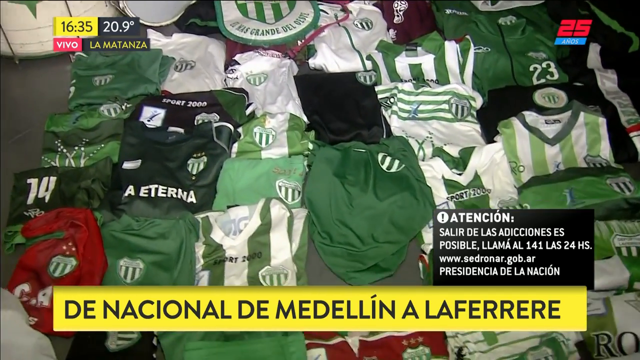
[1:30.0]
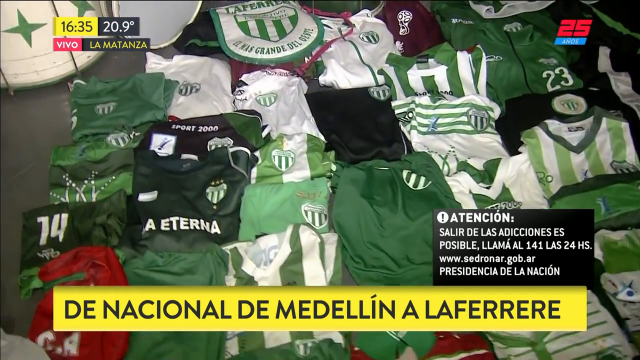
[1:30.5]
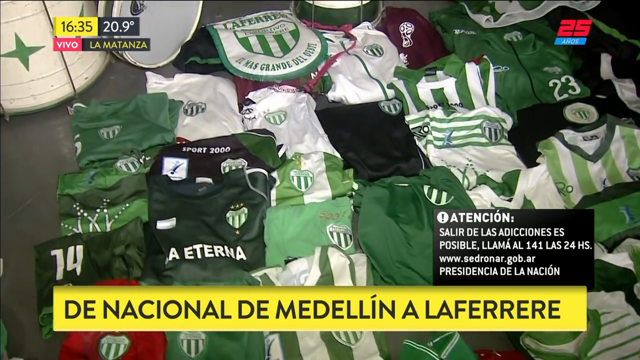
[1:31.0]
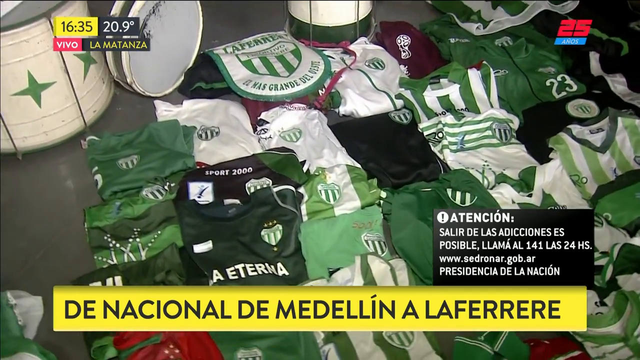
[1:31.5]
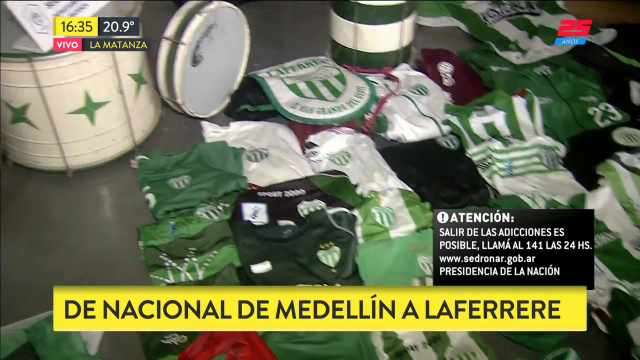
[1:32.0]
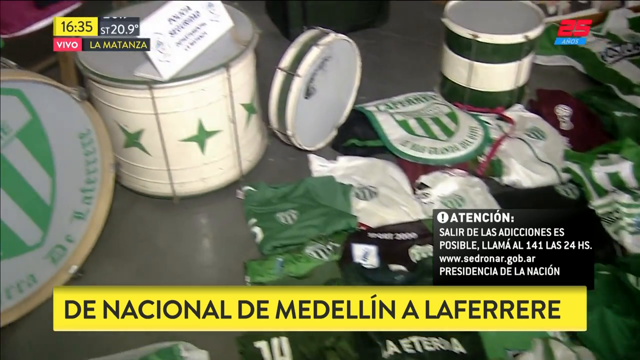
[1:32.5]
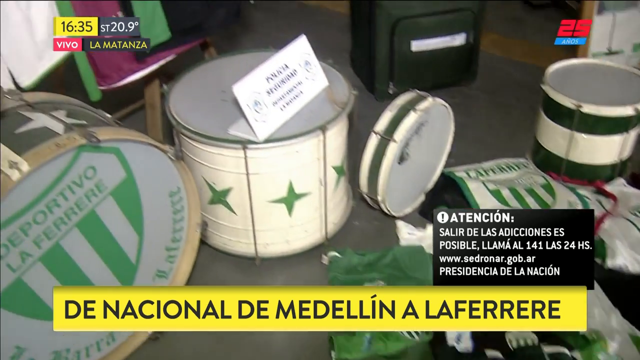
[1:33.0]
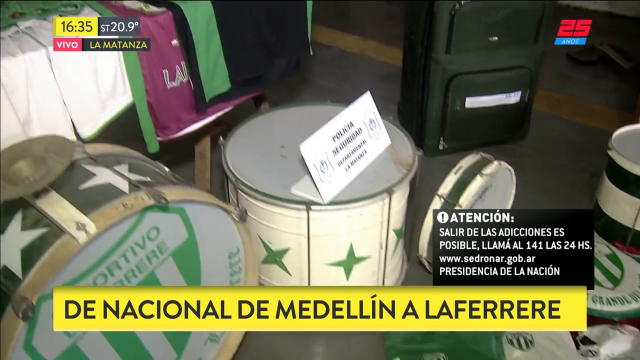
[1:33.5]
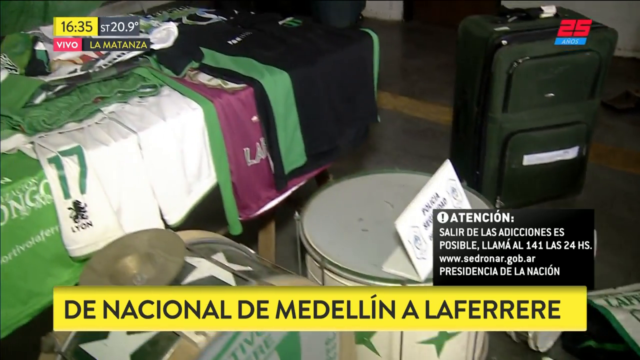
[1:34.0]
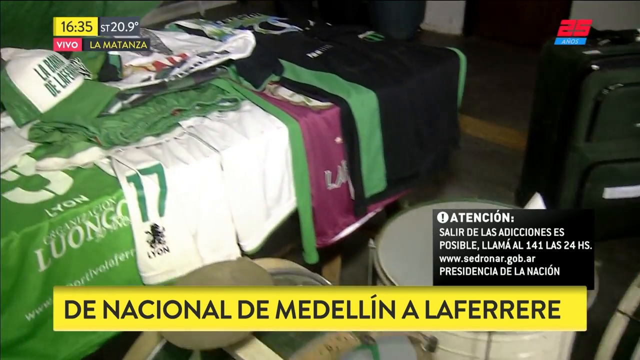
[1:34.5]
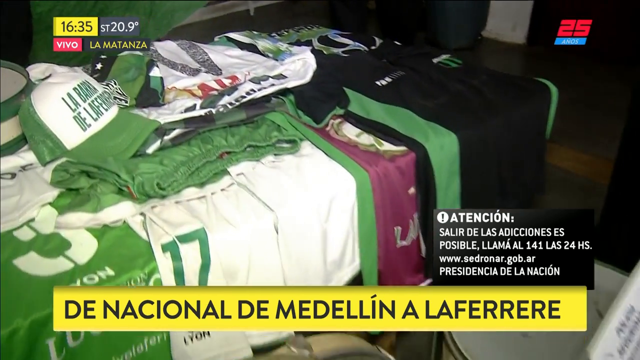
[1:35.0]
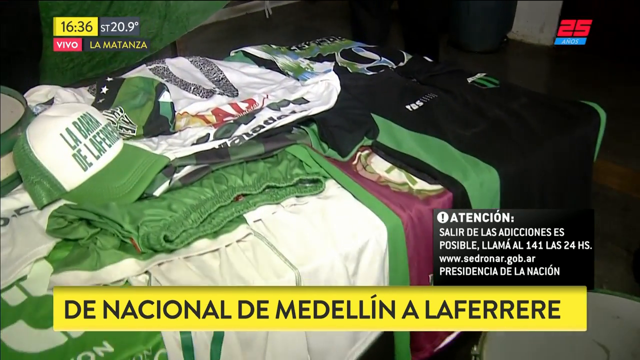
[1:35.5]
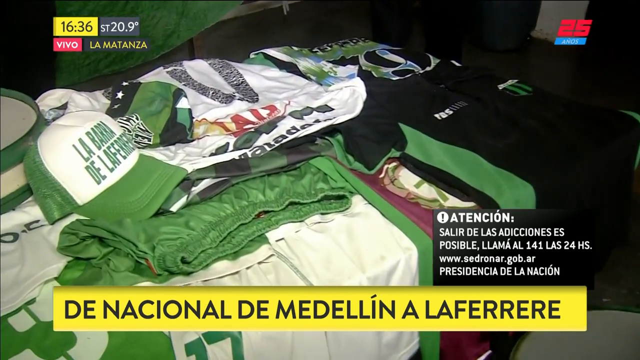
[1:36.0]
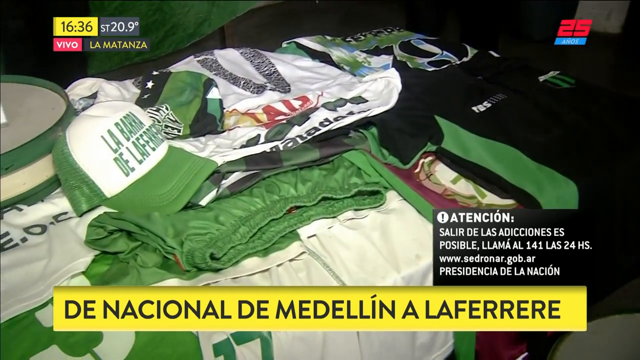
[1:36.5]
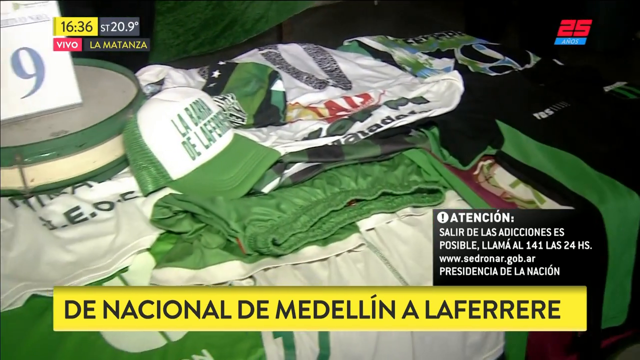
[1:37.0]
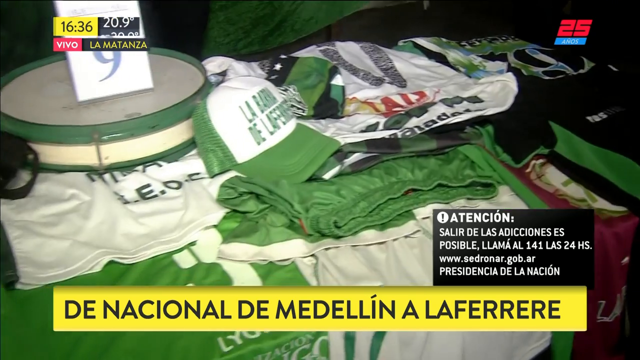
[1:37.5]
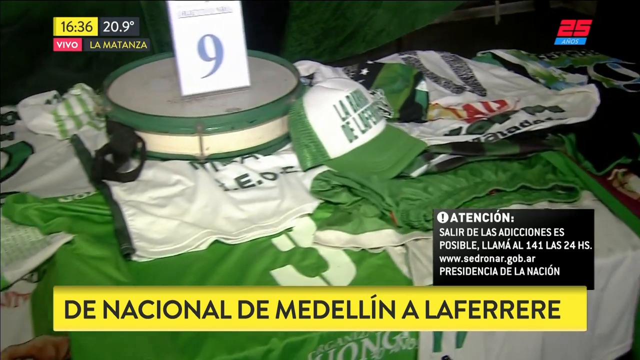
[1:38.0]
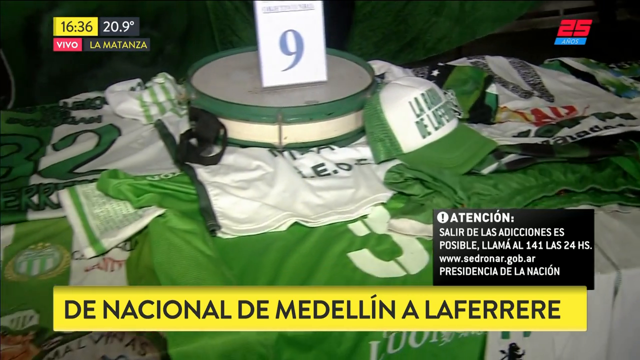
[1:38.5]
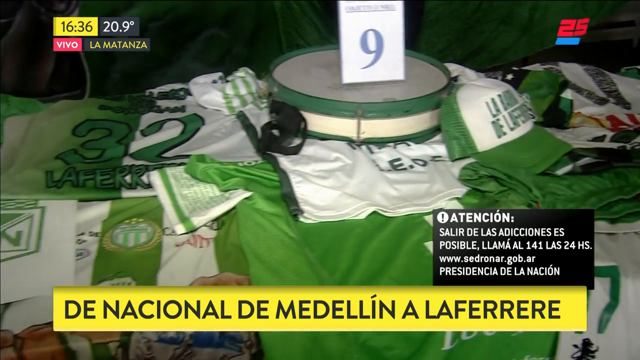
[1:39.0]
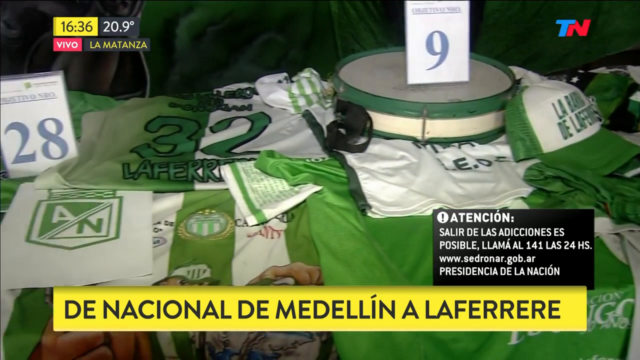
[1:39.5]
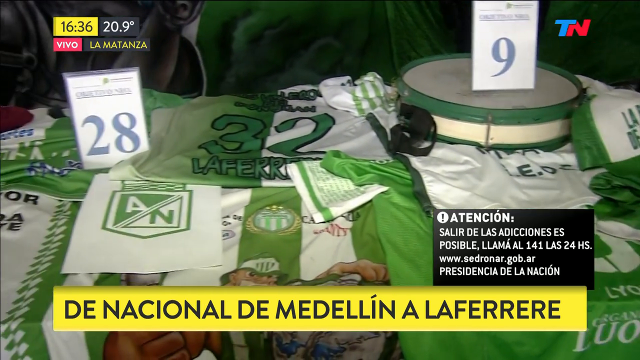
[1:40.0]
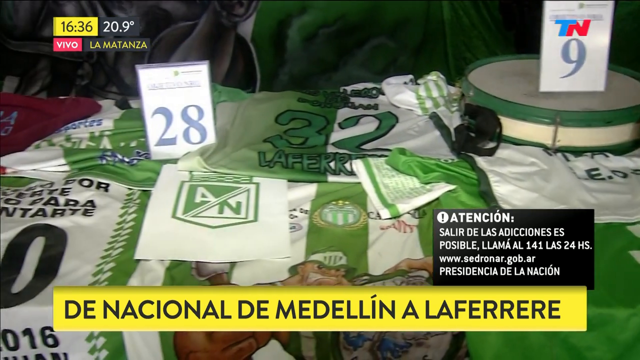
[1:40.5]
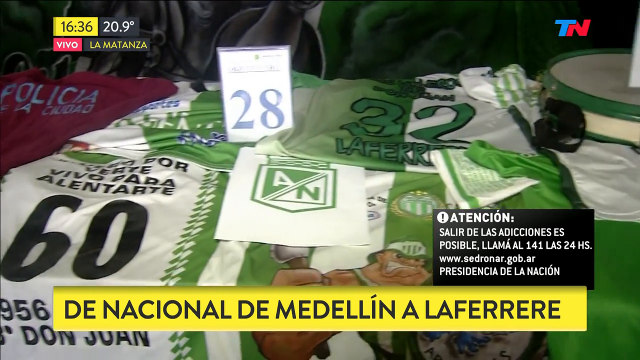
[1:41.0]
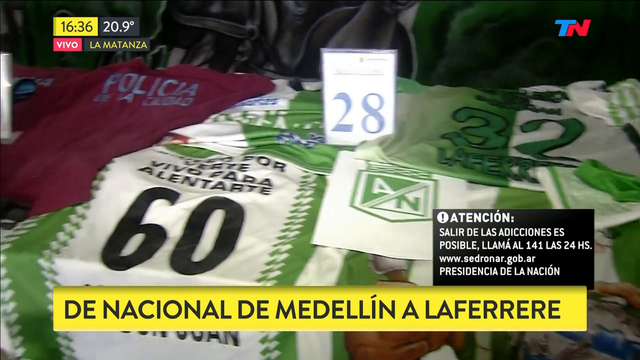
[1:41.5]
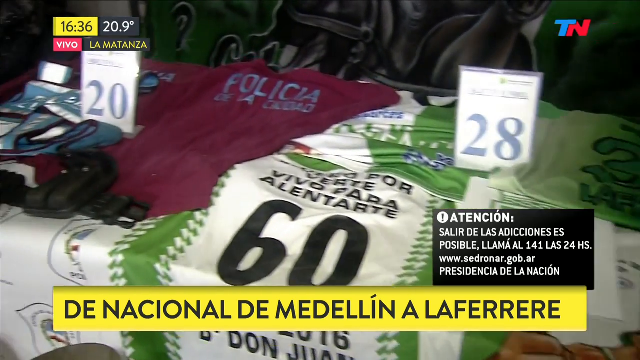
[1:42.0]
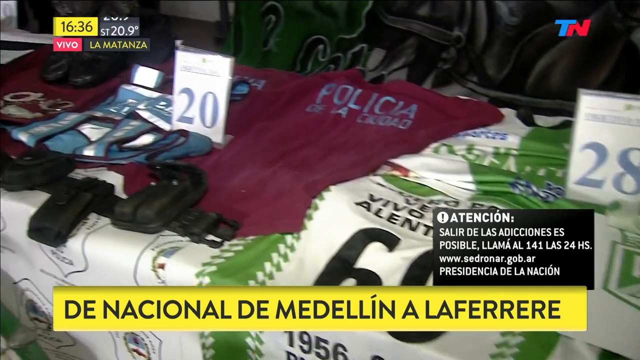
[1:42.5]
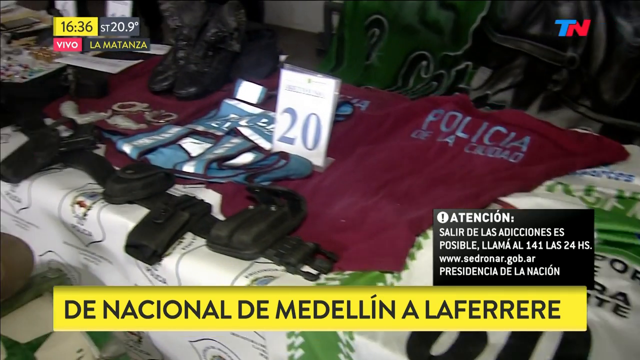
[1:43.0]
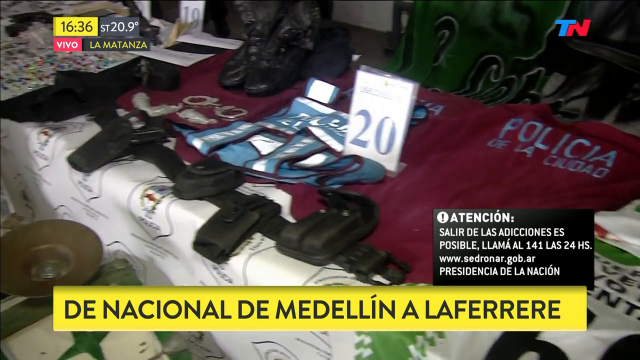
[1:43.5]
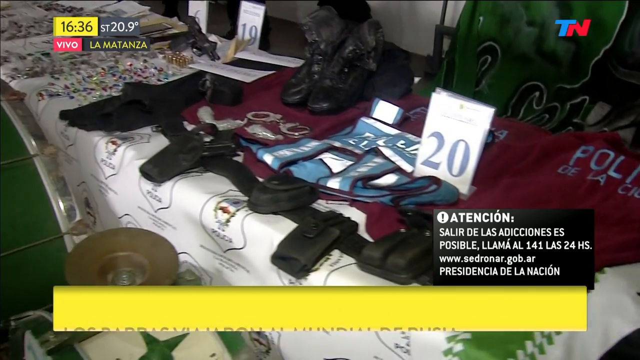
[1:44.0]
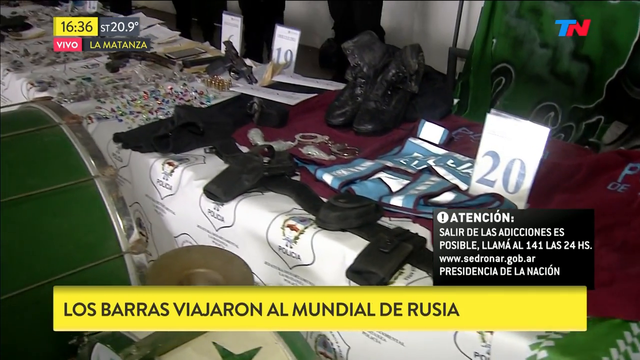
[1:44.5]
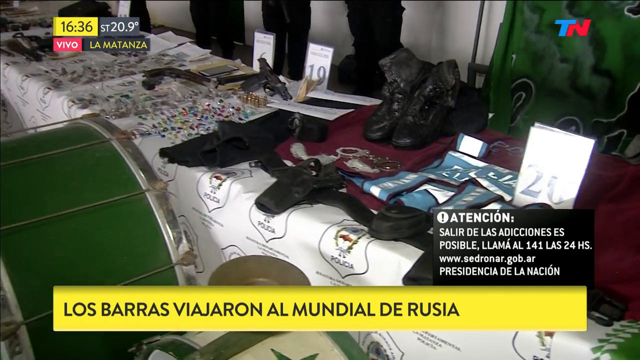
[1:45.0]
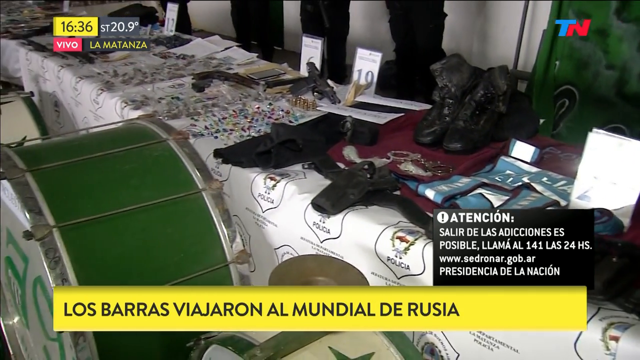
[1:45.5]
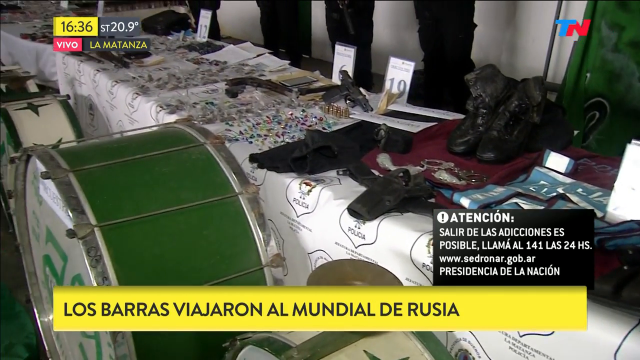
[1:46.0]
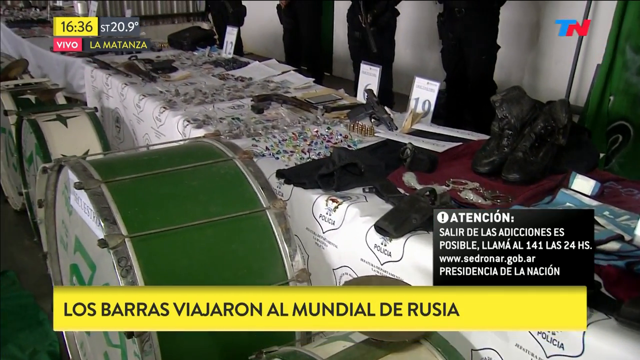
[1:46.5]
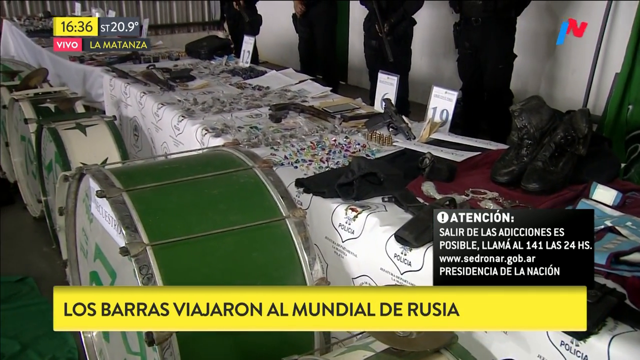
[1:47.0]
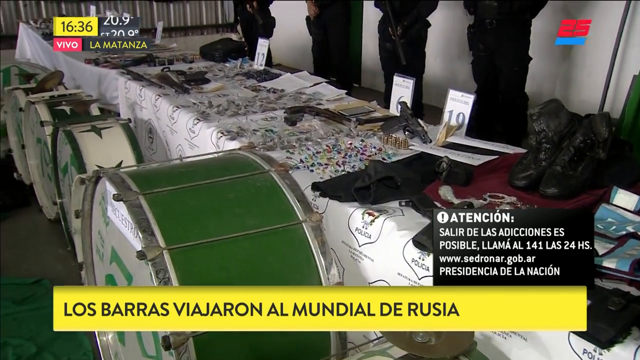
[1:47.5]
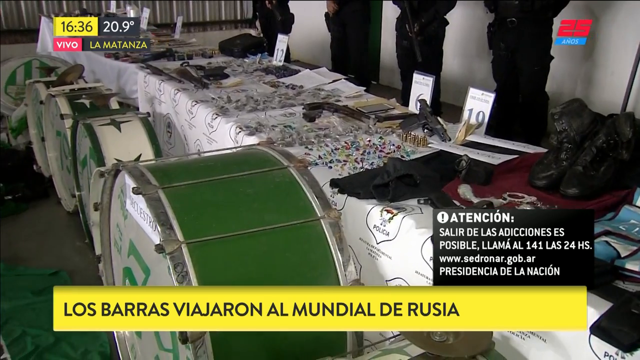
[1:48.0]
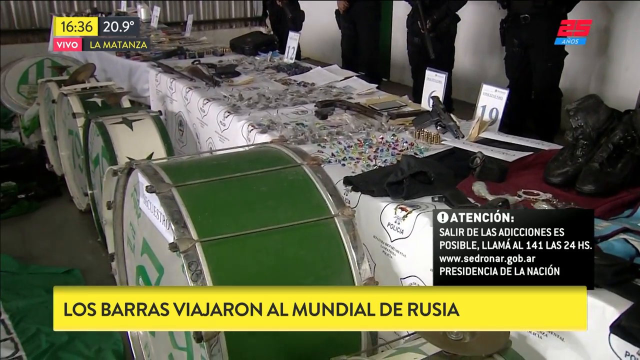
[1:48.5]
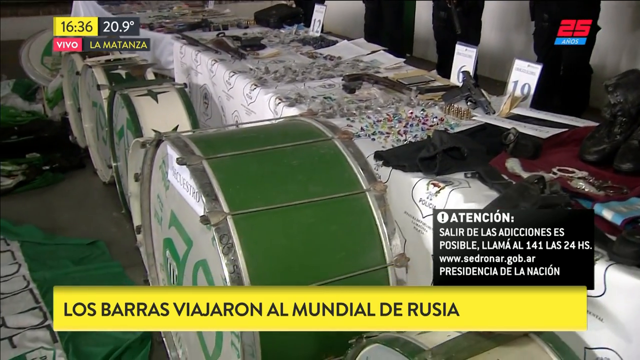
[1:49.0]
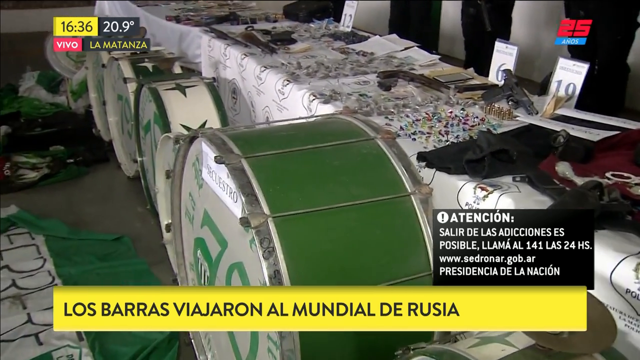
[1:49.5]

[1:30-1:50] Sports jerseys and other materials are displayed on the table. The main colors are green, white and black, most in similar designs, and the fabric seems similar. One t-shirt has the number 60 clearly printed on it, and another has a tag nearby showing the number 28. The table is crowded with clothing and accessories grouped together. A yellow banner across the lower screen has text in French. Above it, a small box contains the word "attention" followed by white text. In the top corner are the time, written in yellow, and the temperature, written in black, apparently indicating the footage is live.